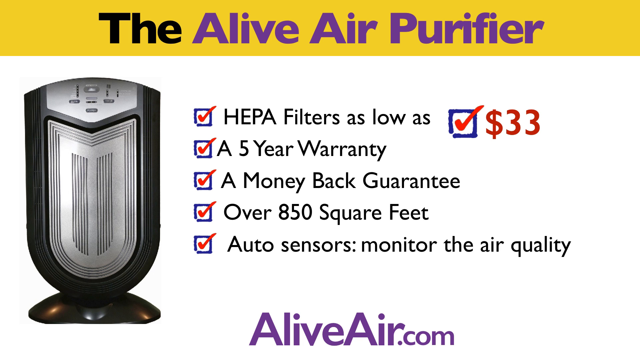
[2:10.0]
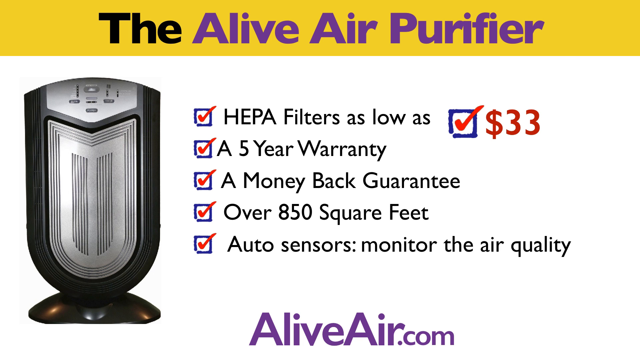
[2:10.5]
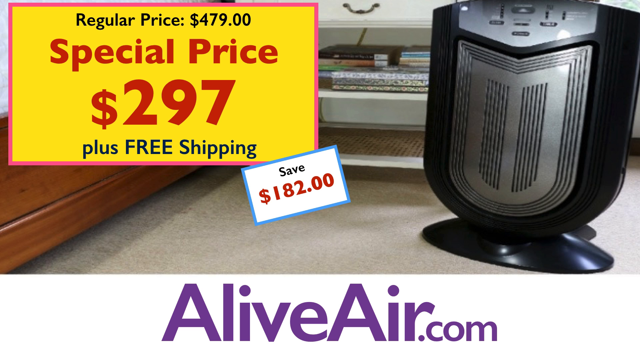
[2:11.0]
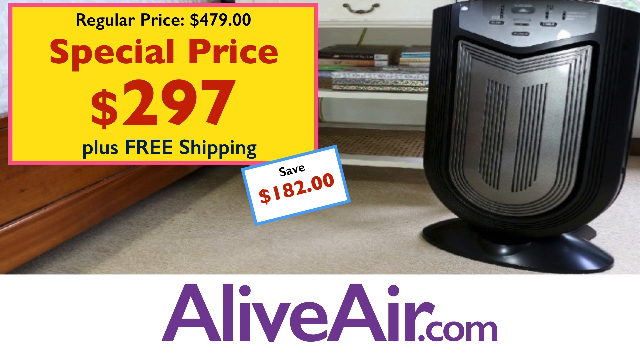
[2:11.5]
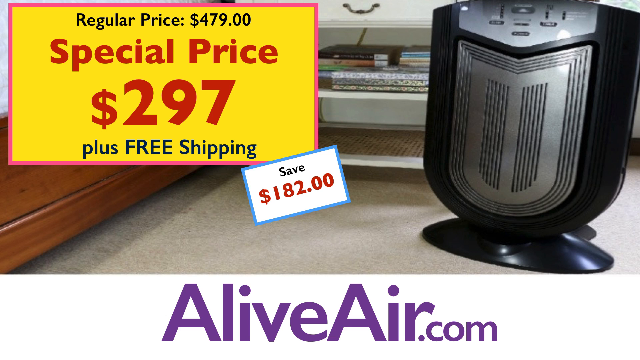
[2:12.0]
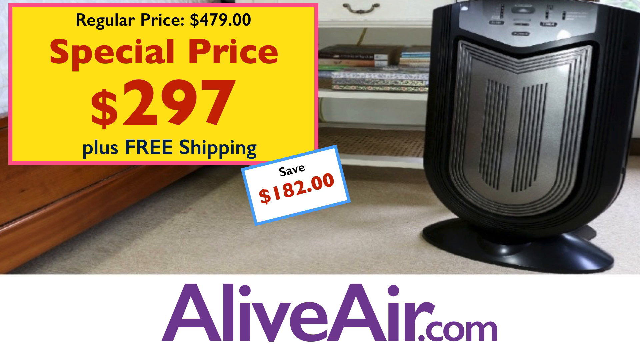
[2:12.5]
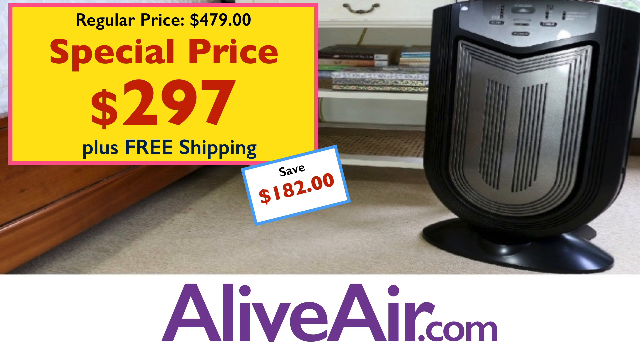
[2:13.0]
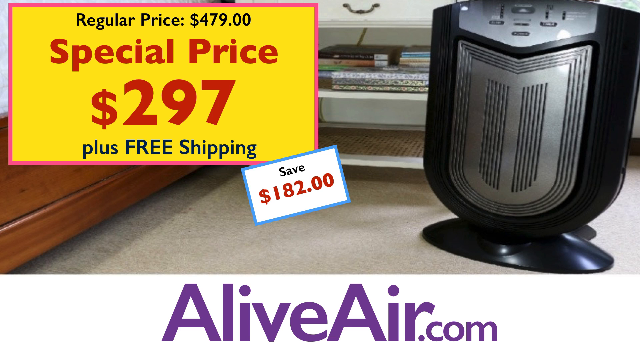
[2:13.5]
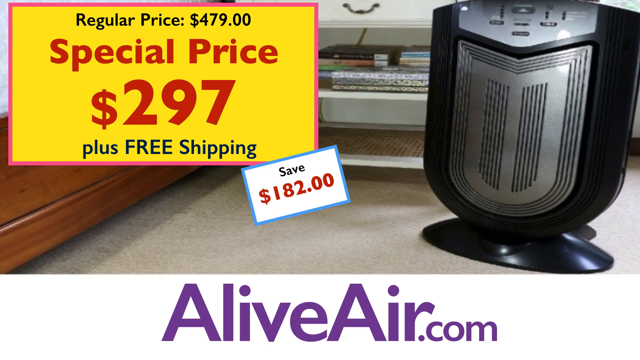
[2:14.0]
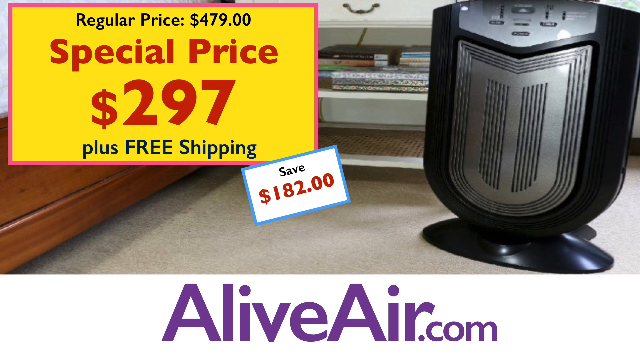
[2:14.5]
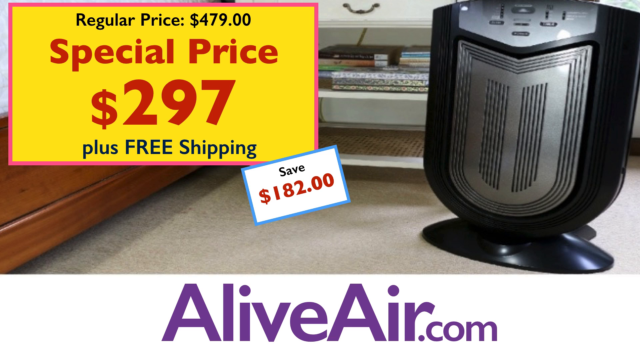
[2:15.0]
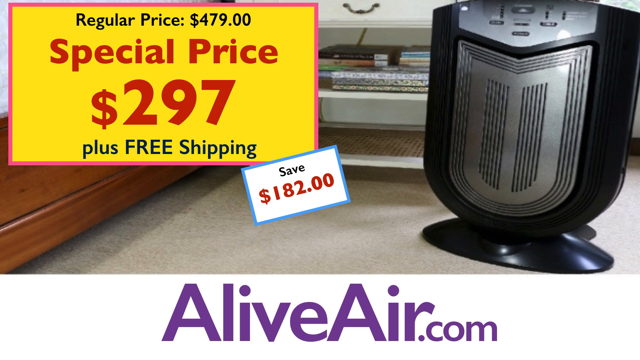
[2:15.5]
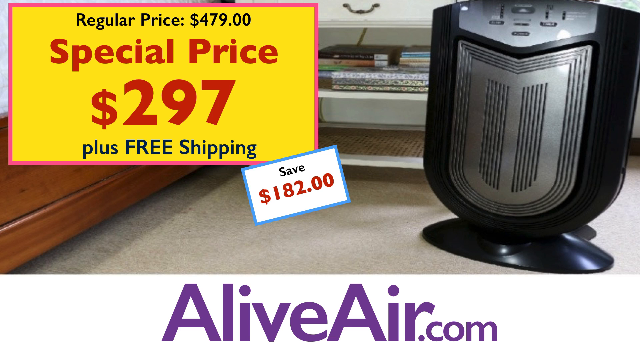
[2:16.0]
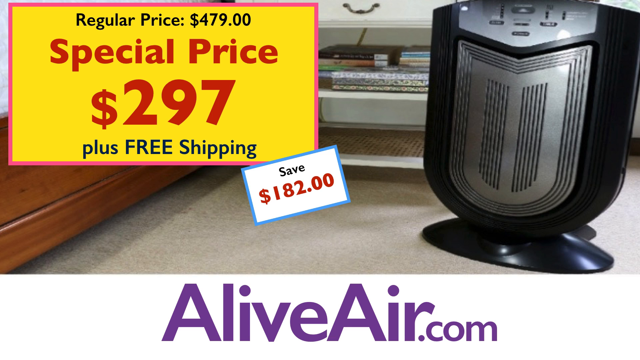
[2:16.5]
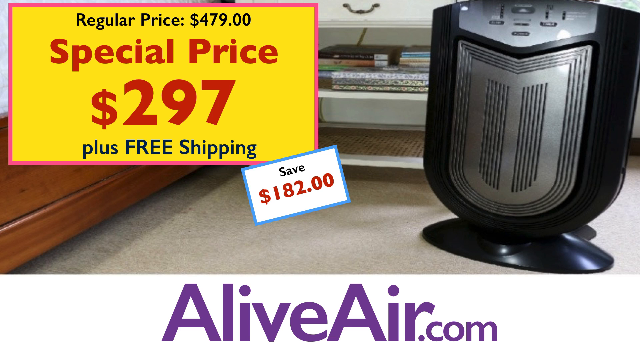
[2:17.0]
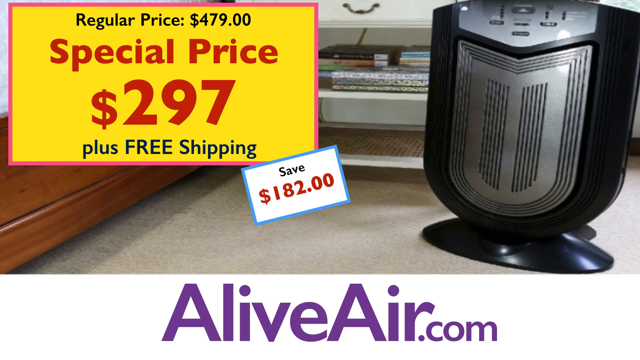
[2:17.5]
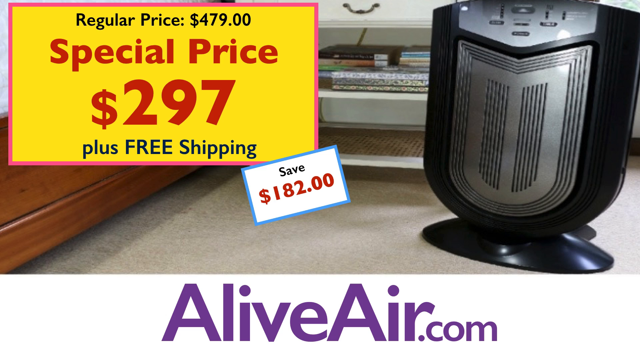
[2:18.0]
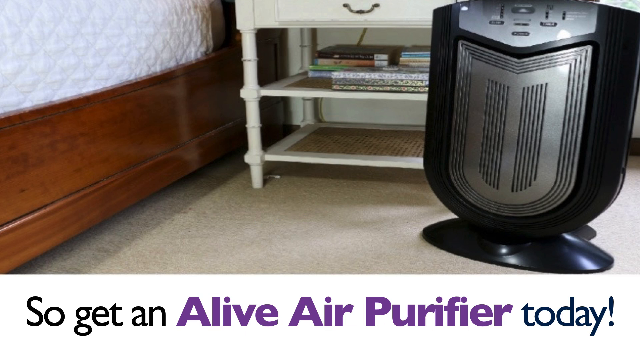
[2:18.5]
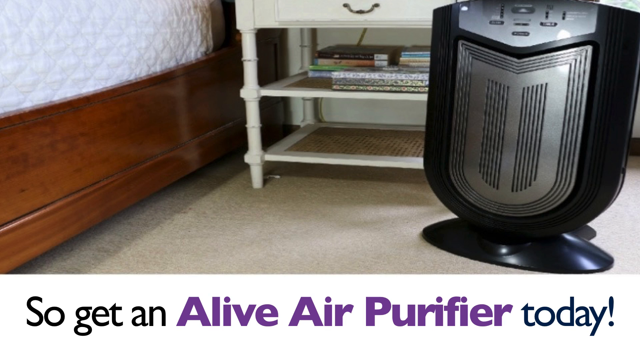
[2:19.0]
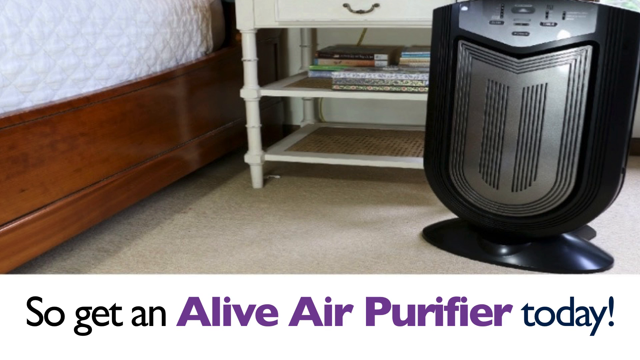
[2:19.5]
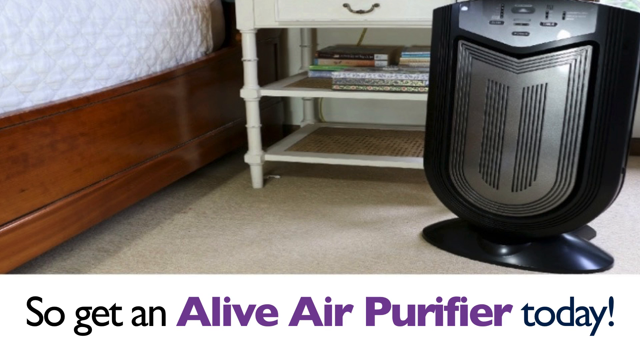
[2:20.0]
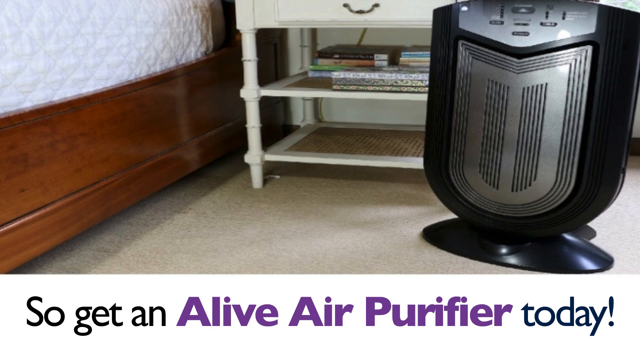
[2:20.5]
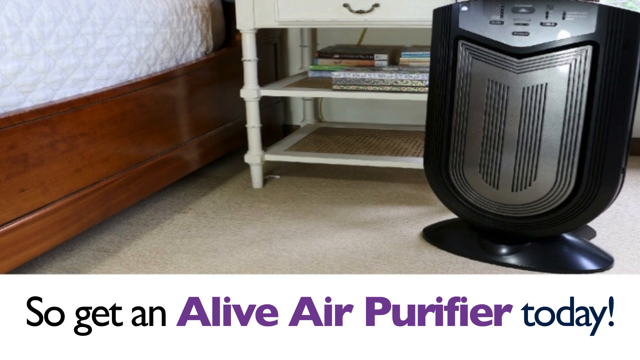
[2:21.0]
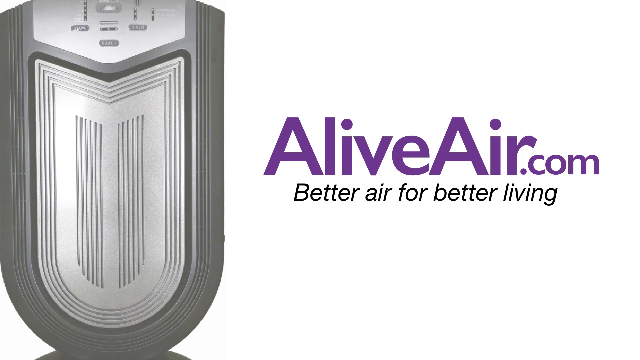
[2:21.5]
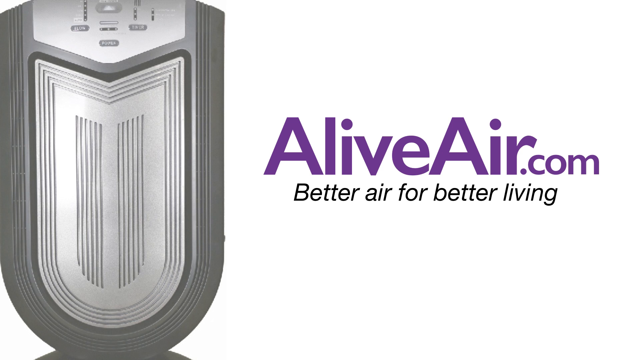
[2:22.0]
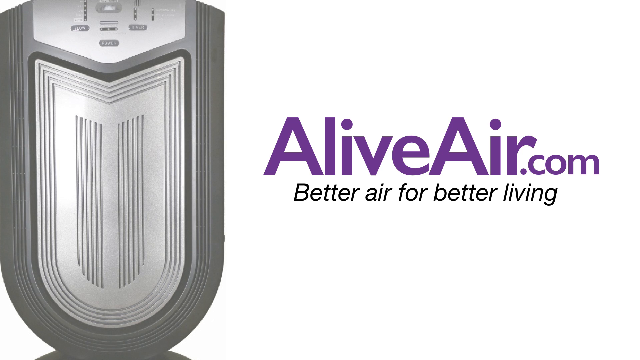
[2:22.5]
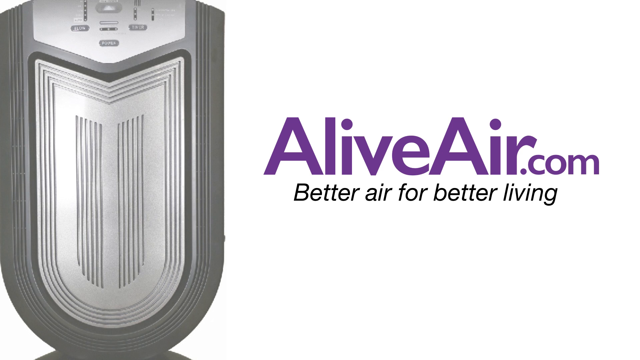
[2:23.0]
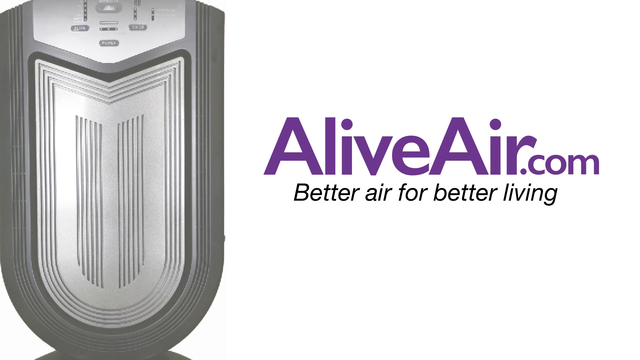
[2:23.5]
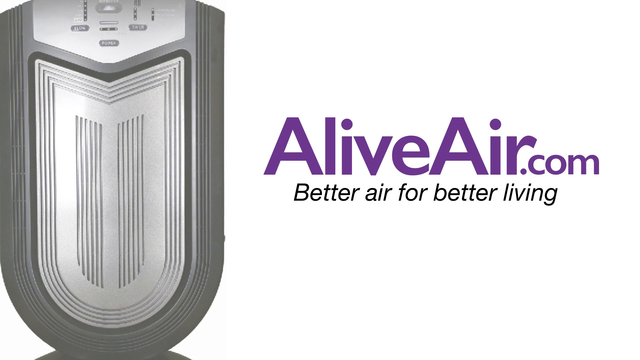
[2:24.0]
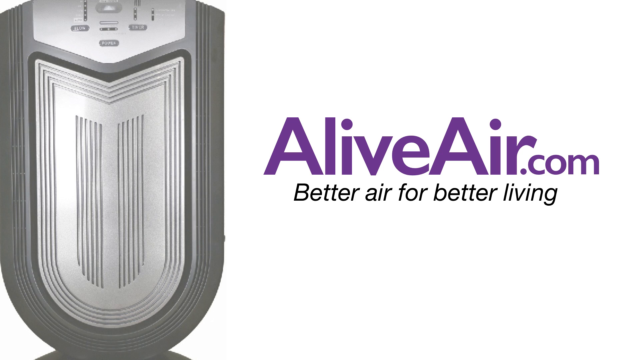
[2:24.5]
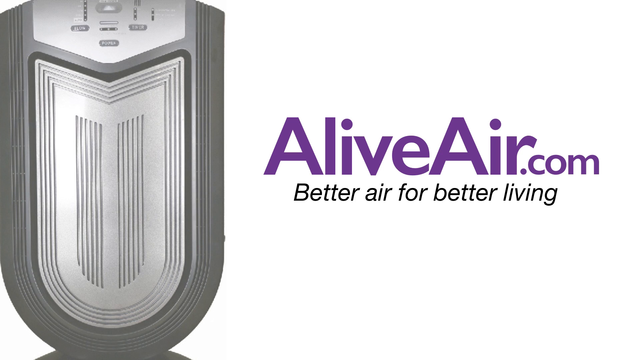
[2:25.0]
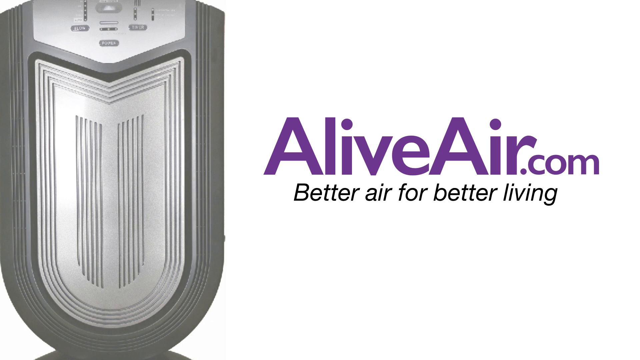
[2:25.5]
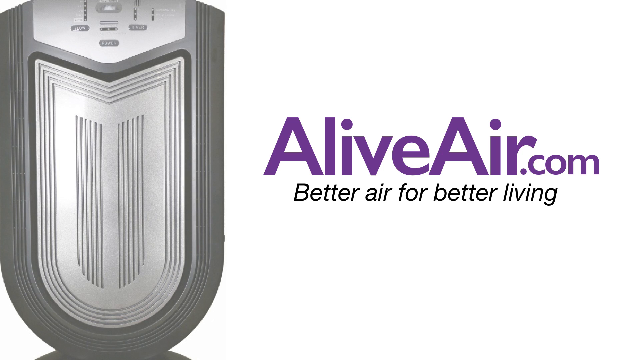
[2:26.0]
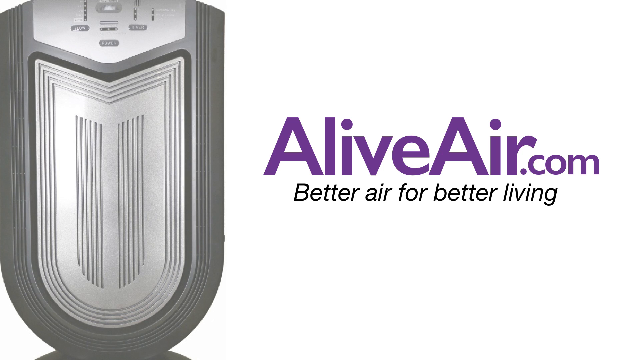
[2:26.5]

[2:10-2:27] The slide has "the" in bold black and "Alive Air Purifier" in bold purple, all in title case, in the yellow box at the top. A picture of an air purifier is on the left of the screen, followed by bullet points: "HEPA filters as low as $33", with $33 in numbers with a dollar sign in a slightly larger font and a slightly larger check box to its left, then "a five-year warranty", "money back guarantee", "over 850 square feet" and "auto sensors monitor the air quality", each bullet point a blue check box with a red check mark. Next is a photograph of one of these devices sitting on a carpeted floor in front of a white storage unit with a drawer with a fairly ornate handle at the top, books on a shelf below that and an empty shelf below that, and to the left what looks like a bed. A yellow box with a pink surround shows "special price 297" centrally justified, with 297 in a font approximately 70% larger; above it are the words "regular price $479.00", and underneath in dark blue "+ FREE Shipping", with "FREE" all in uppercase and "Shipping" with a capital S. Another rectangle, slightly at an angle, overlaps just the corner of the yellow box, with a light blue surround, the word "save" in a small font and "$182.00" across the middle in bright red. This stays on screen for a while, then the price ticket disappears, leaving a view of the air purifier on the floor of the bedroom. Finally, a picture of the air purifier takes up about a third of the left of the slide, with "AliveAir.com" in purple, "AliveAir" twice the size of ".com" and both A's in uppercase, and below that in a smaller font and in italics, "Better Air for Better Living".